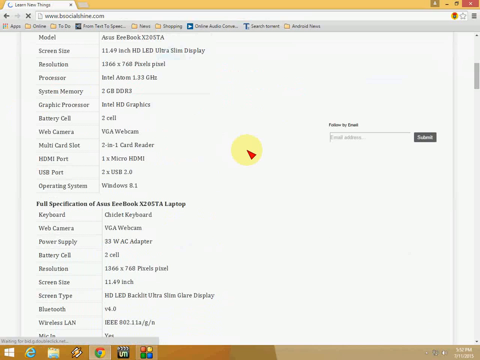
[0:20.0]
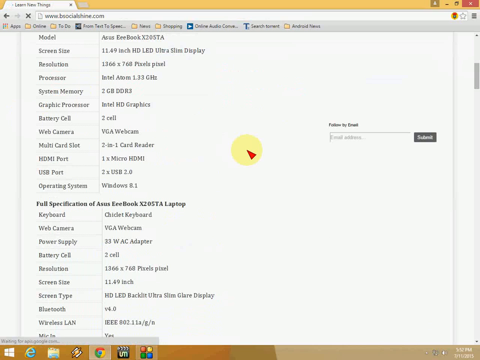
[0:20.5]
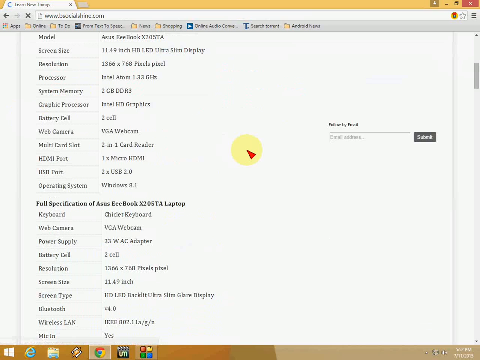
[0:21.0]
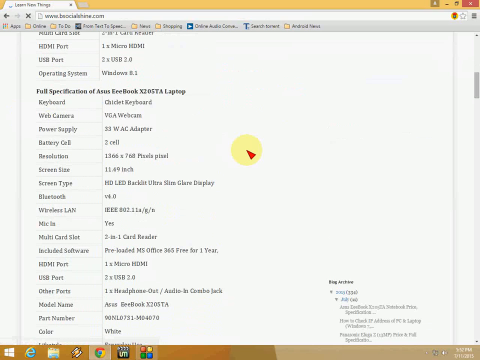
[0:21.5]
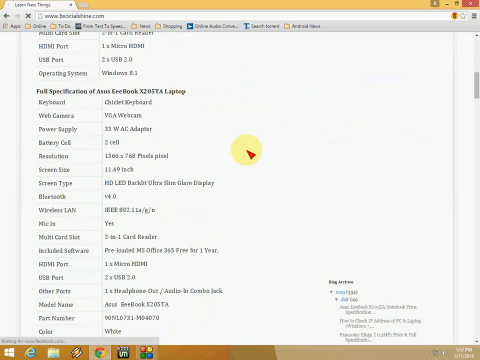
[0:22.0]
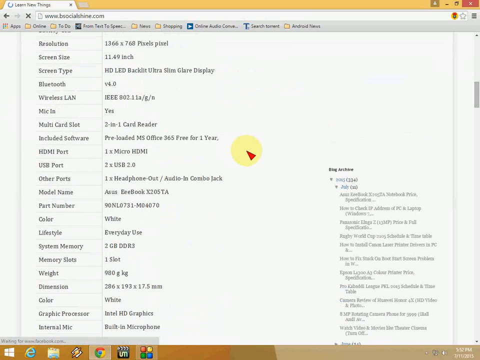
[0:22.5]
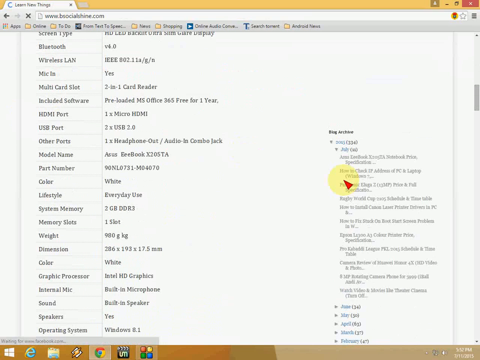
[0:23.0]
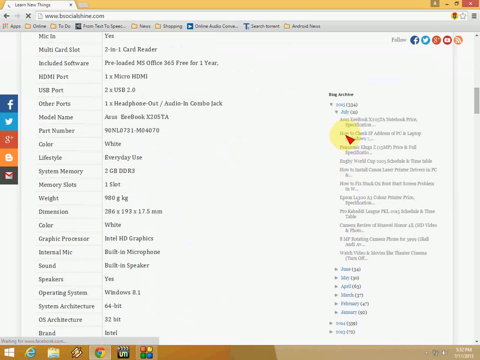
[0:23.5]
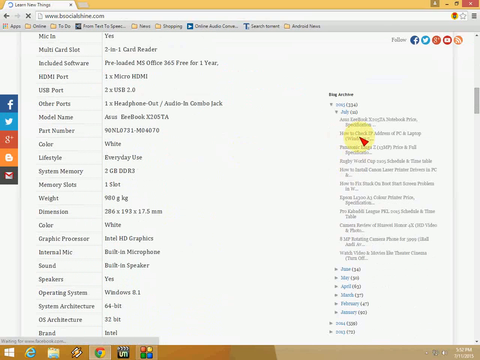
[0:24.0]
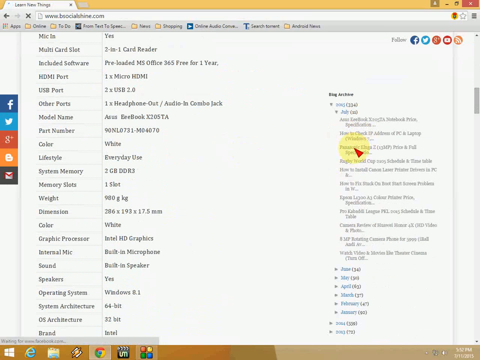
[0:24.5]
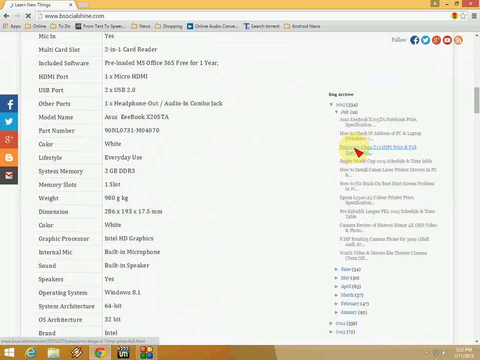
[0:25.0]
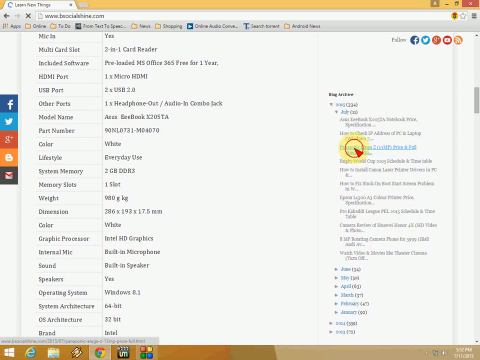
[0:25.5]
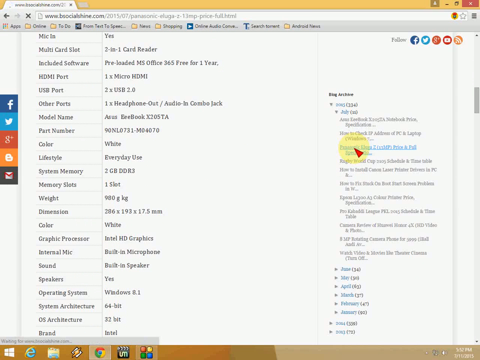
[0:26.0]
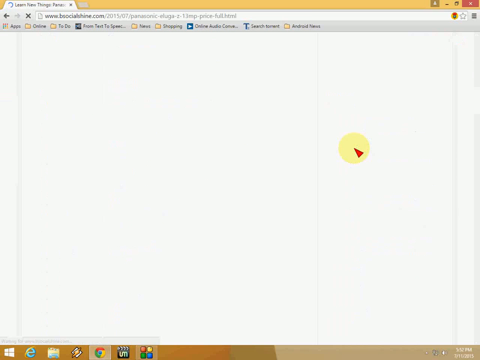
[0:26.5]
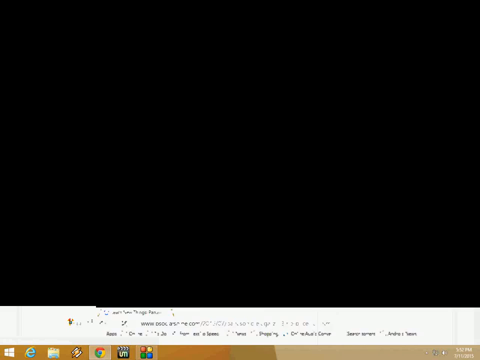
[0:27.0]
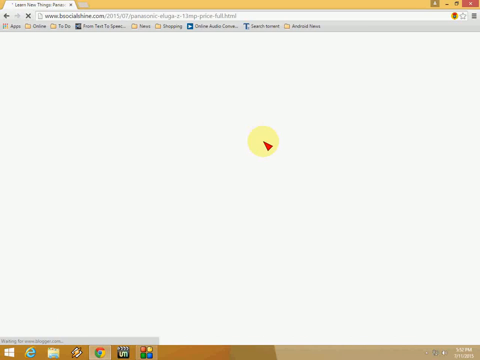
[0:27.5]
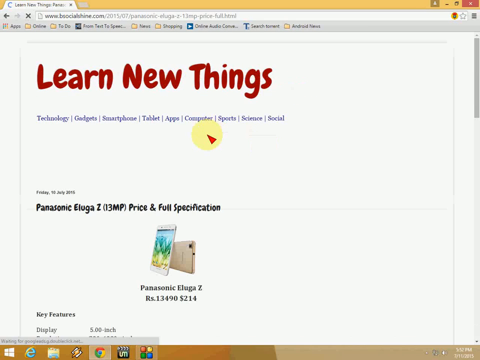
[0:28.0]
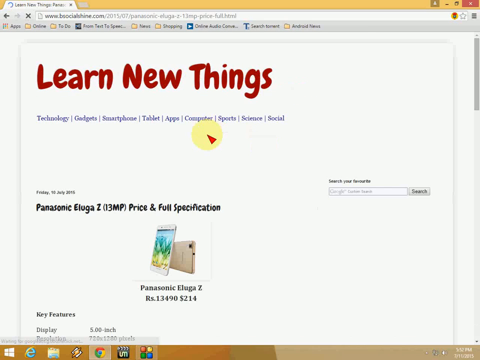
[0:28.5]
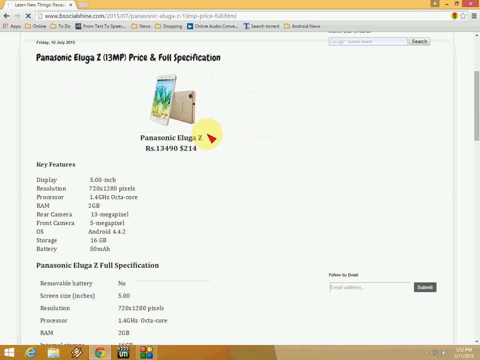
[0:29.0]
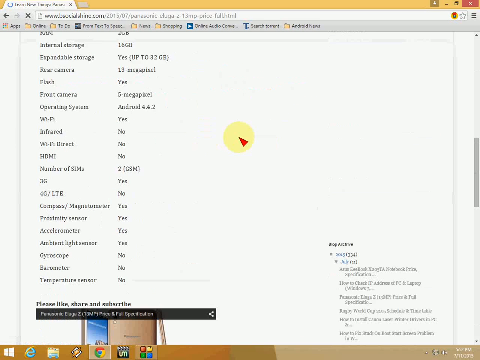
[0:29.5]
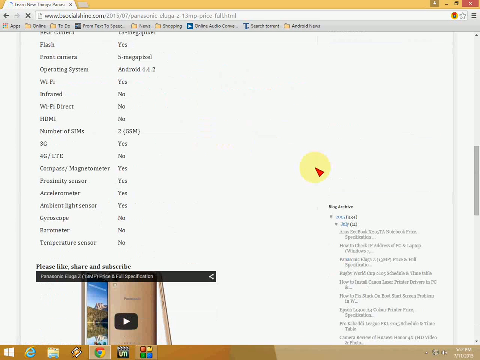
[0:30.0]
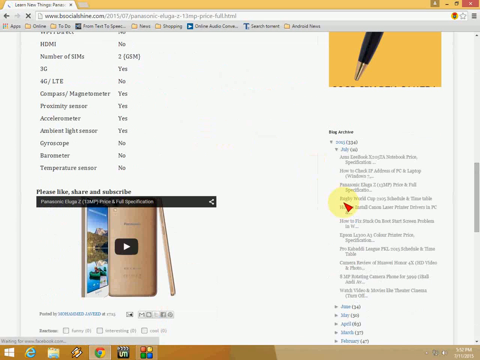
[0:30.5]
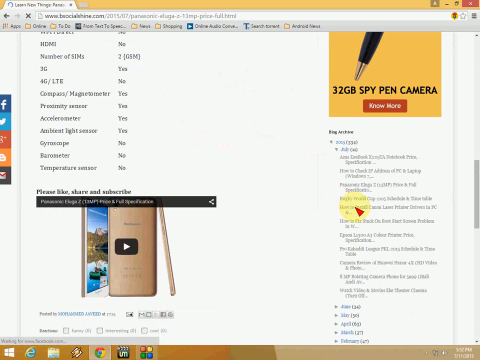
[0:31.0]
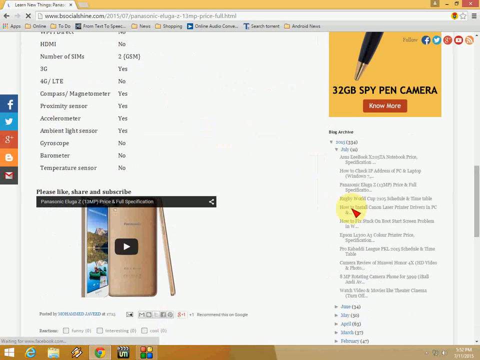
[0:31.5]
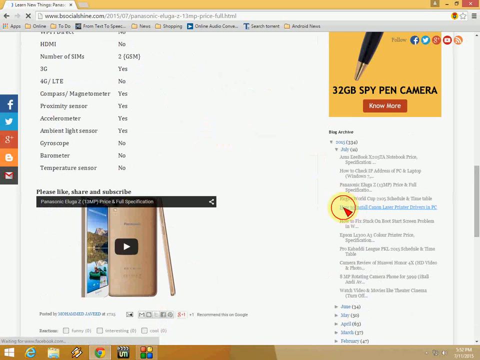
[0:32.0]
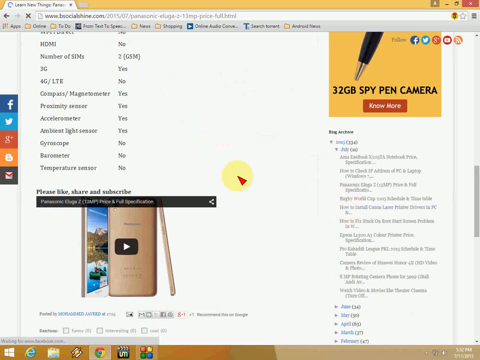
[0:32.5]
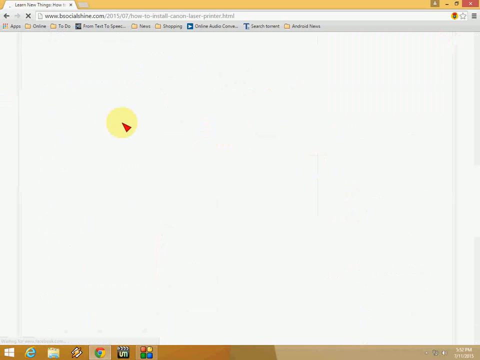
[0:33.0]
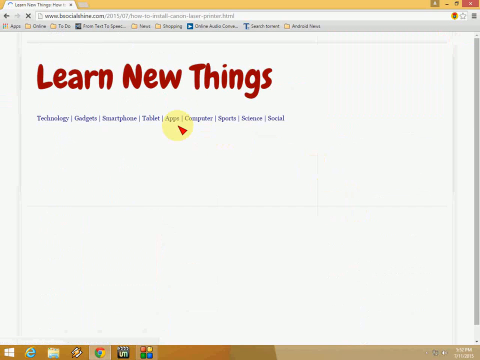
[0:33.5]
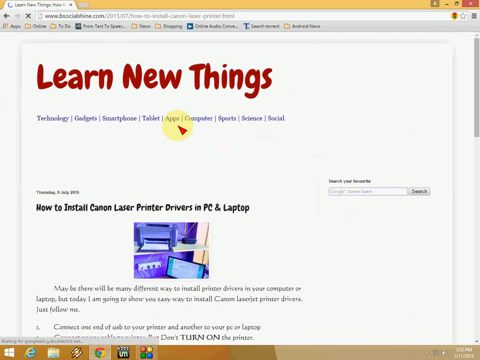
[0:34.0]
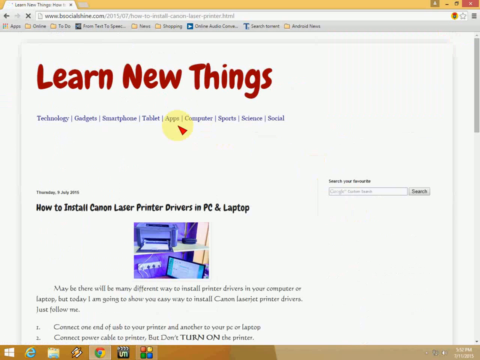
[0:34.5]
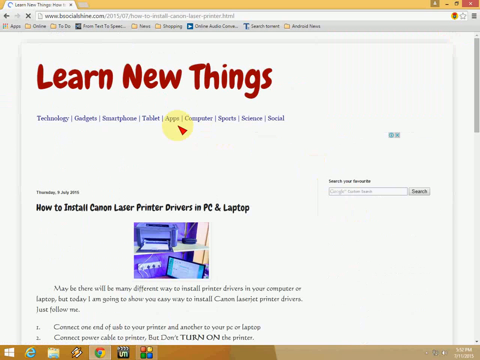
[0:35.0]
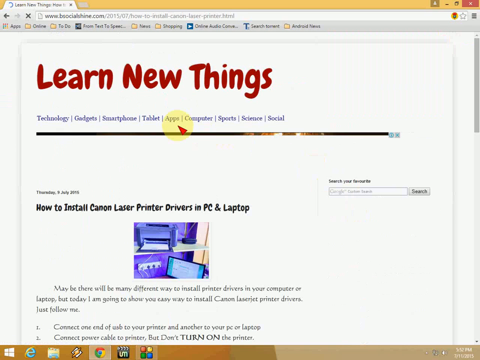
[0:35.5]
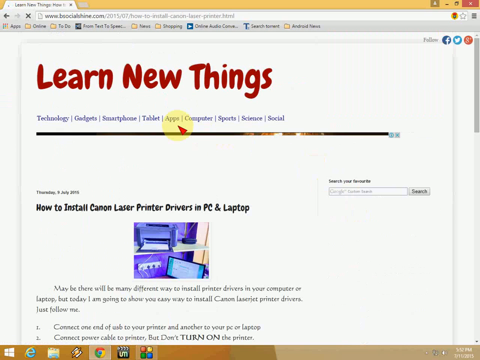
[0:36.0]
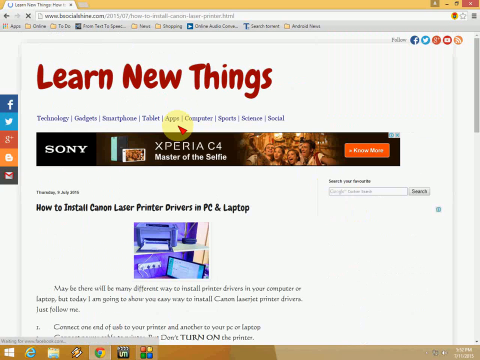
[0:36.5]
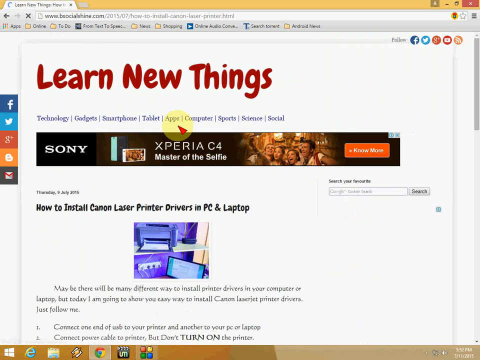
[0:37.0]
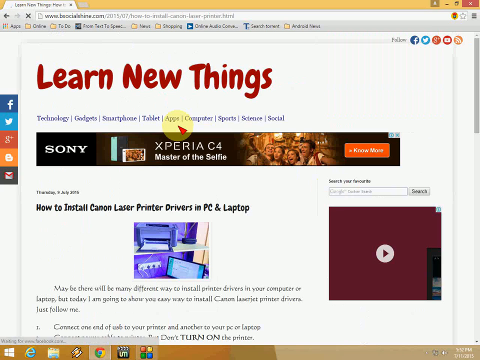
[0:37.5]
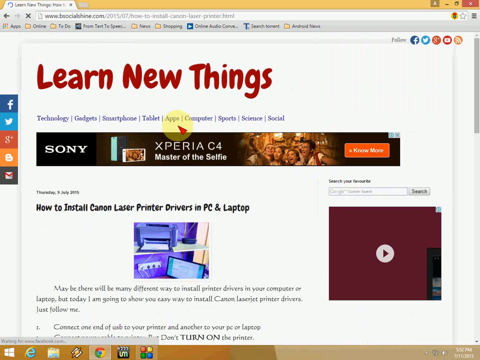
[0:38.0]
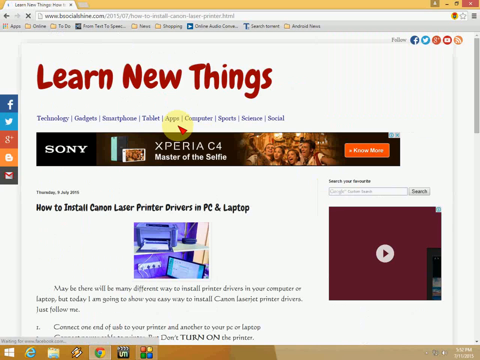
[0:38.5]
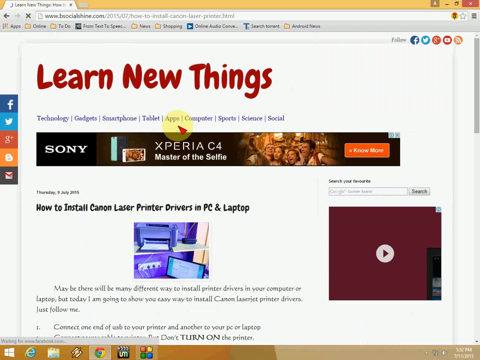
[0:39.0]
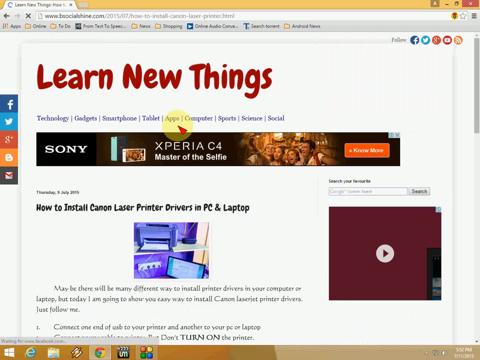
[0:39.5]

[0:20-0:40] The page scrolls down through many of the laptop's specifications. On the right-hand side of the screen, a section titled "blog archive" in bold black text becomes visible, with two drop-down menus for July and a year underneath. The mouse cursor hovers over one of the links, which reads "how to check IP address of PC and laptop". The cursor then moves down one item to the link below this one and clicks it; the screen goes white and the website reloads. The page is scrolled back to the same part of the Learn New Things site, and the link is clicked again. A new page opens, labeled "How to Install Canon Laser Printer Drivers in PC and Laptop". As the website loads, a Sony banner ad for the Xperia Z4 is present under the menu bar at the top of the site. On the right-hand side of the screen is an ad with a play button and a maroon background.